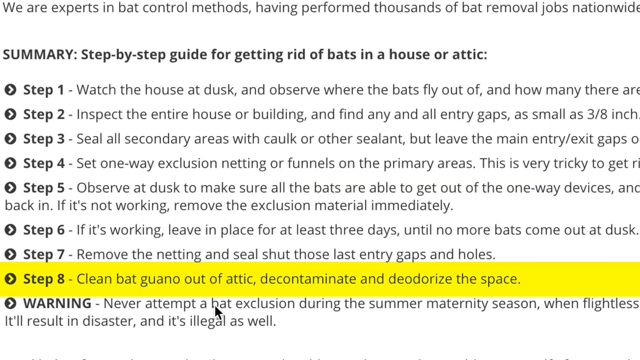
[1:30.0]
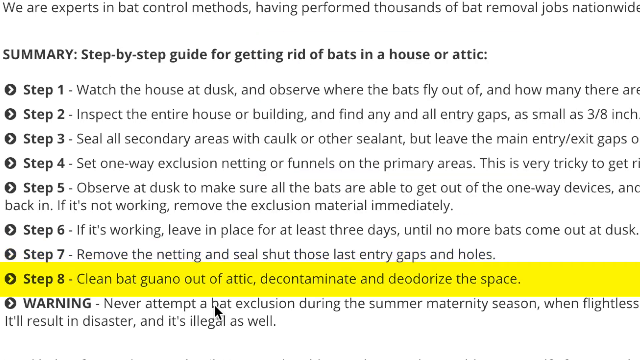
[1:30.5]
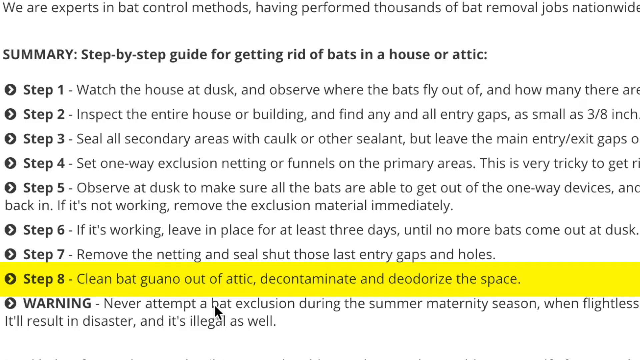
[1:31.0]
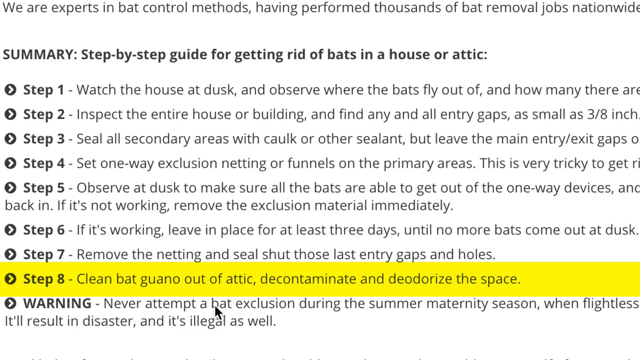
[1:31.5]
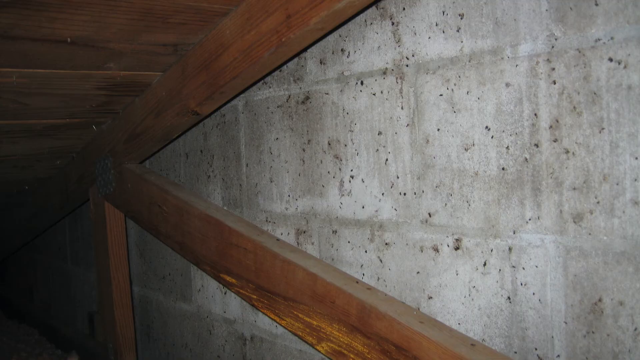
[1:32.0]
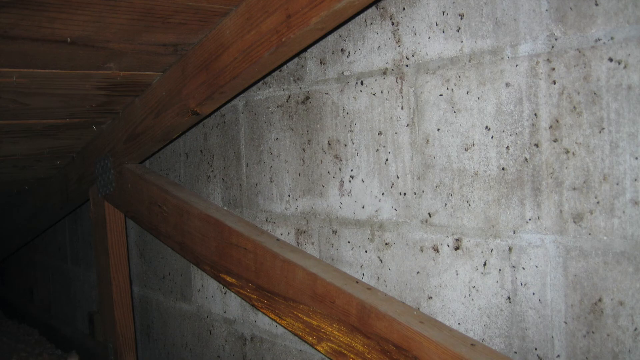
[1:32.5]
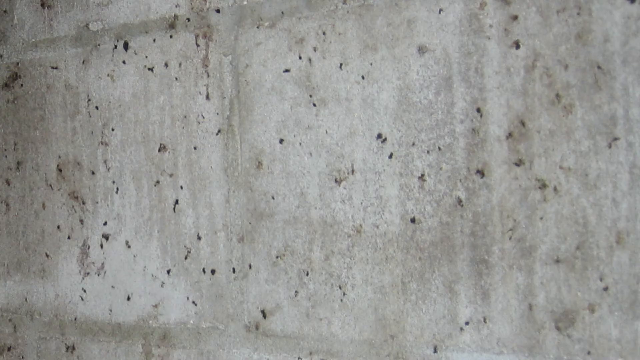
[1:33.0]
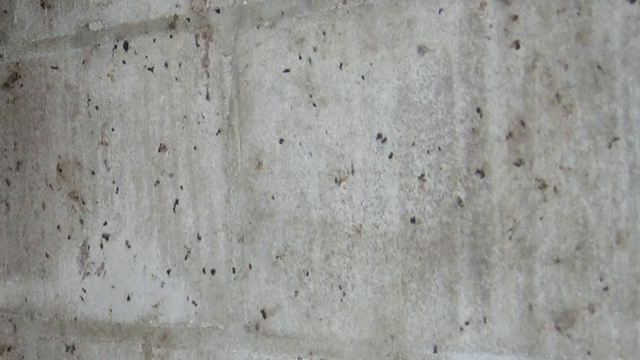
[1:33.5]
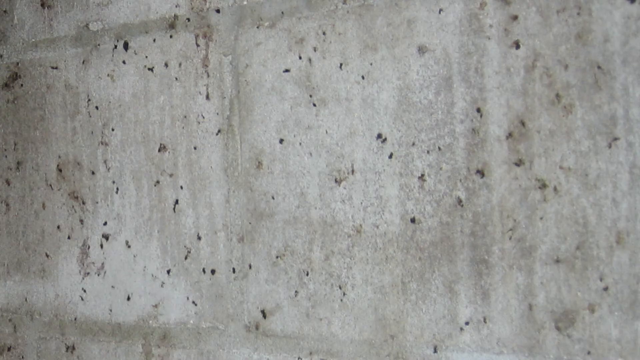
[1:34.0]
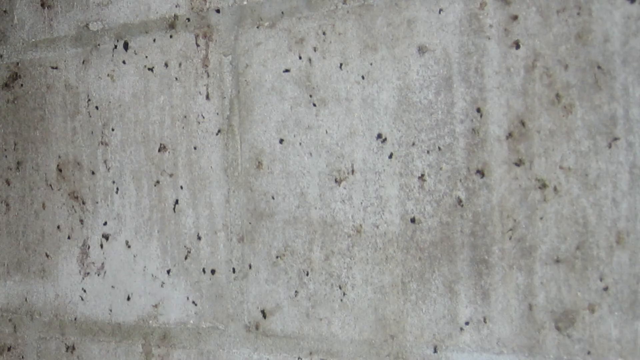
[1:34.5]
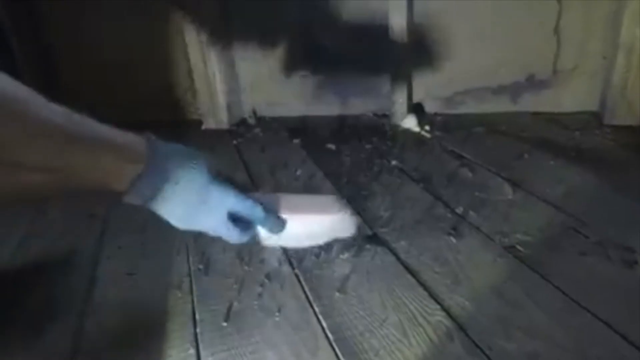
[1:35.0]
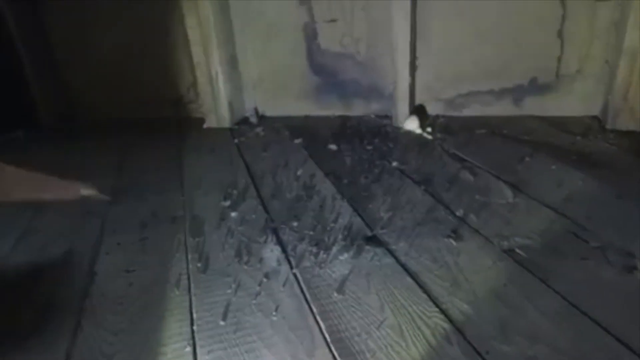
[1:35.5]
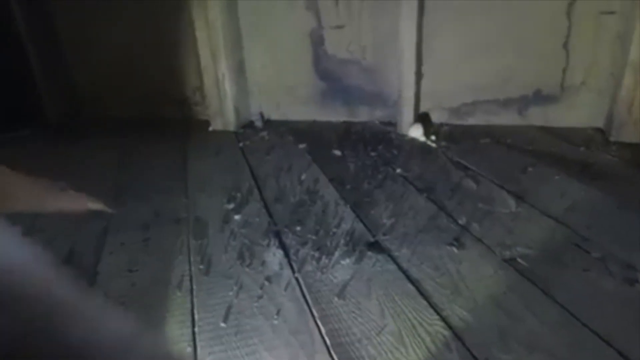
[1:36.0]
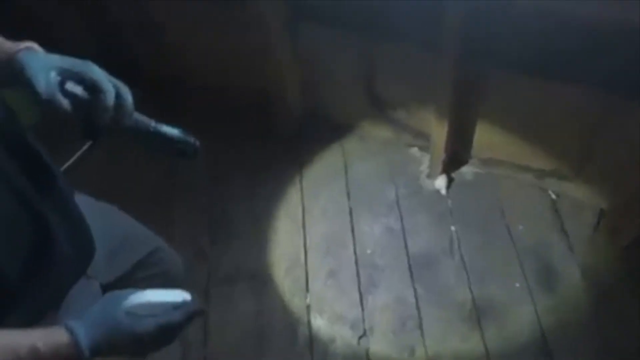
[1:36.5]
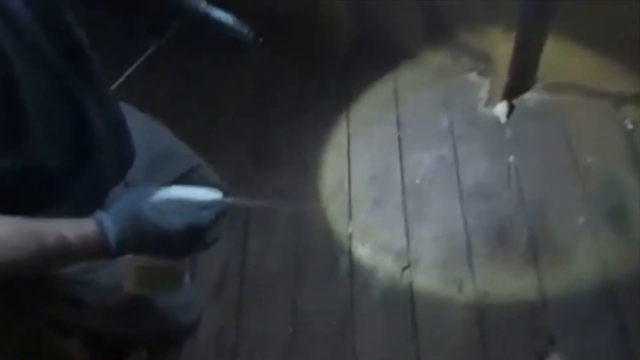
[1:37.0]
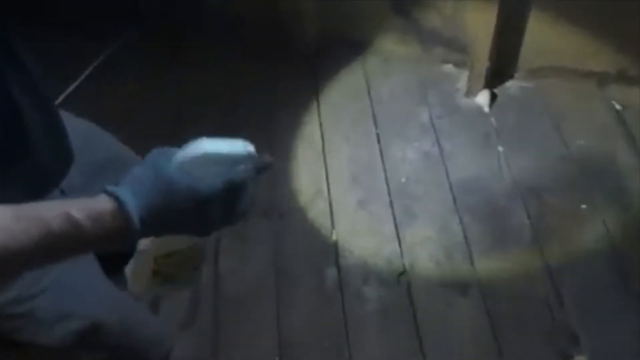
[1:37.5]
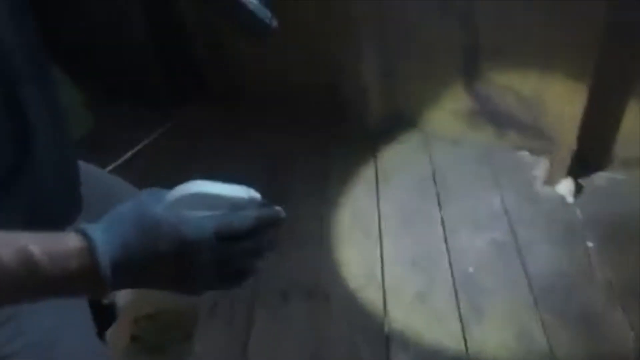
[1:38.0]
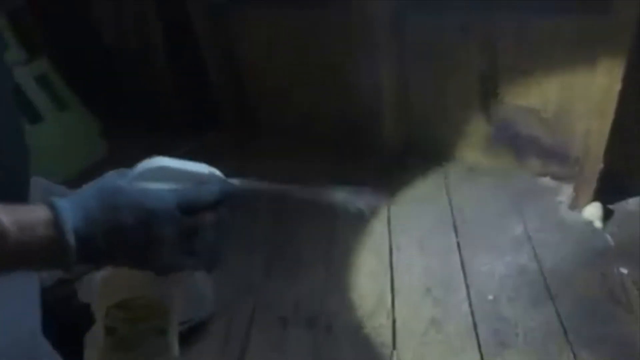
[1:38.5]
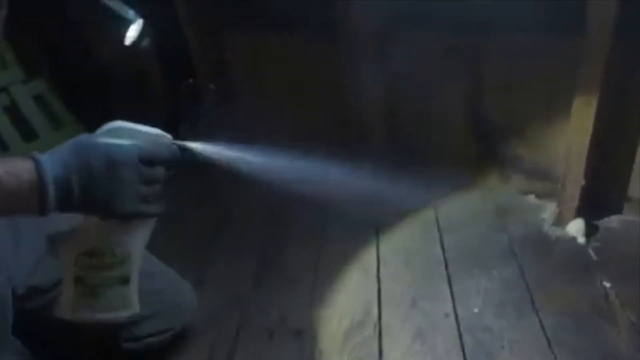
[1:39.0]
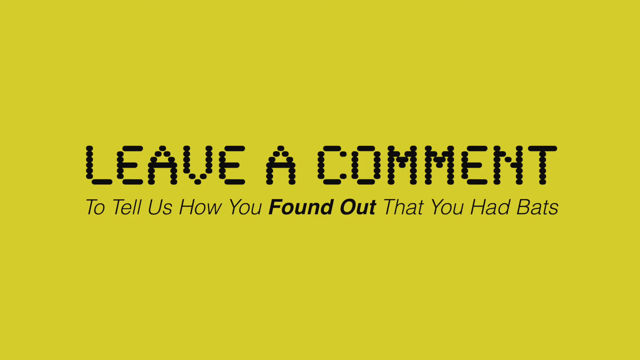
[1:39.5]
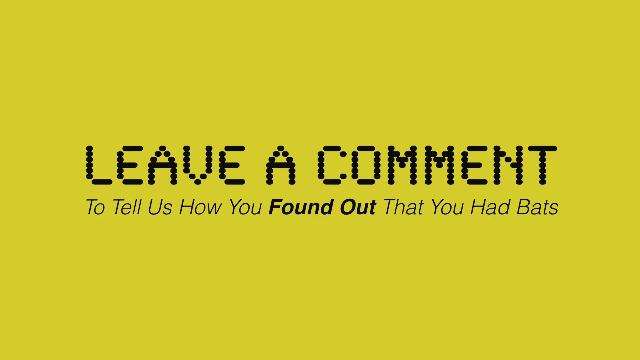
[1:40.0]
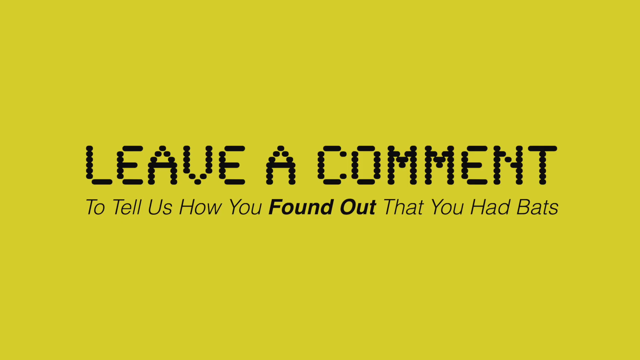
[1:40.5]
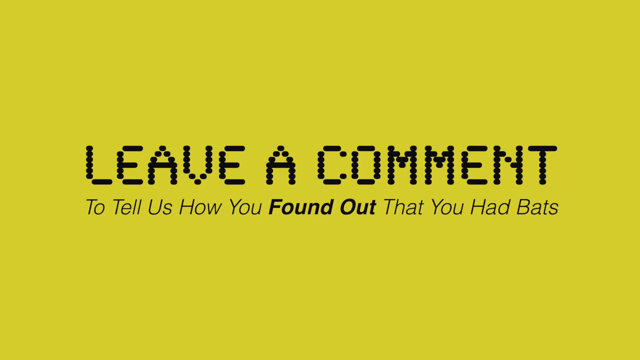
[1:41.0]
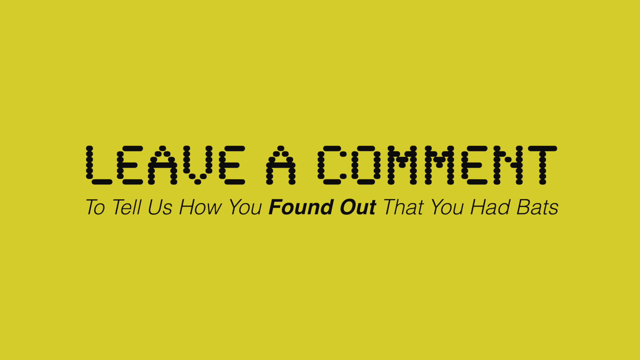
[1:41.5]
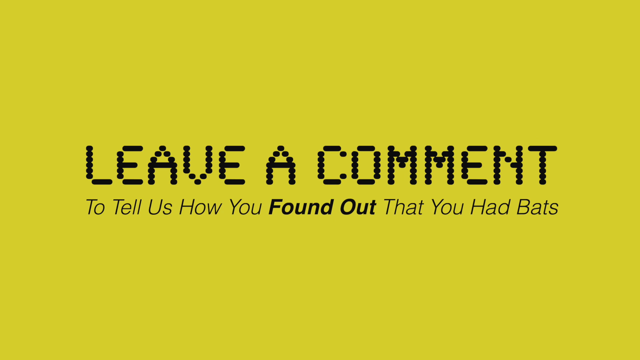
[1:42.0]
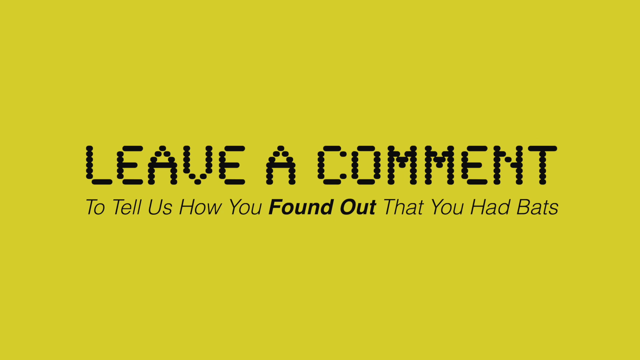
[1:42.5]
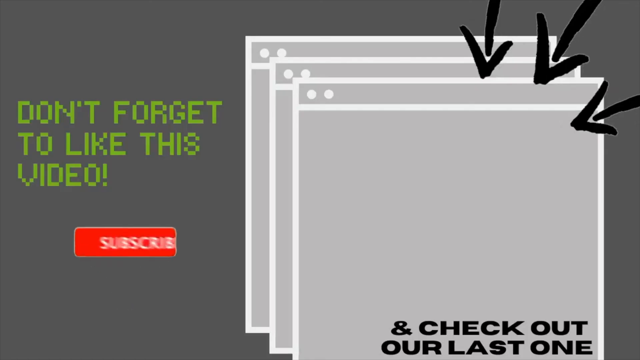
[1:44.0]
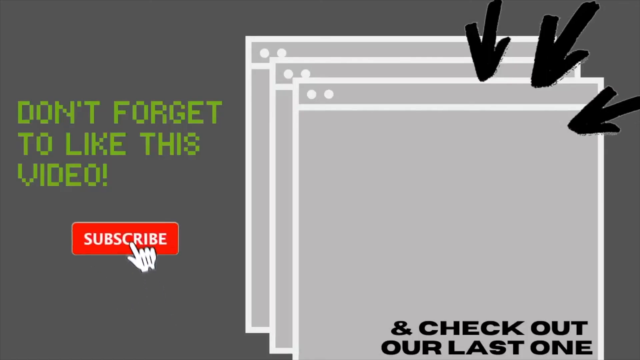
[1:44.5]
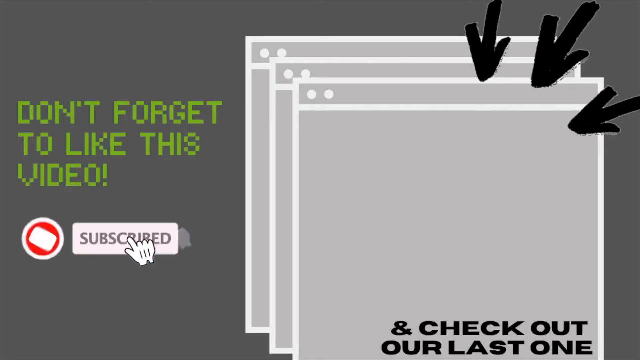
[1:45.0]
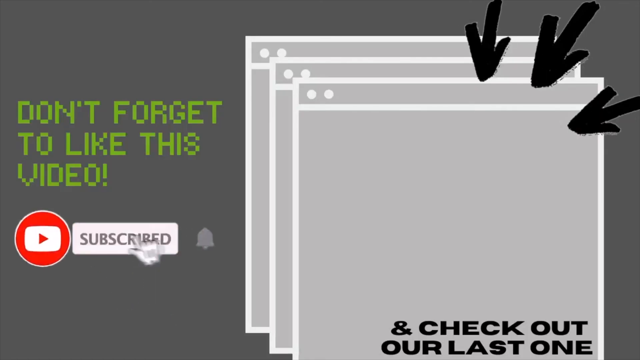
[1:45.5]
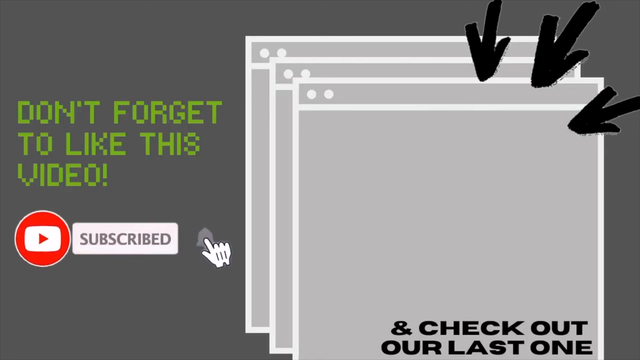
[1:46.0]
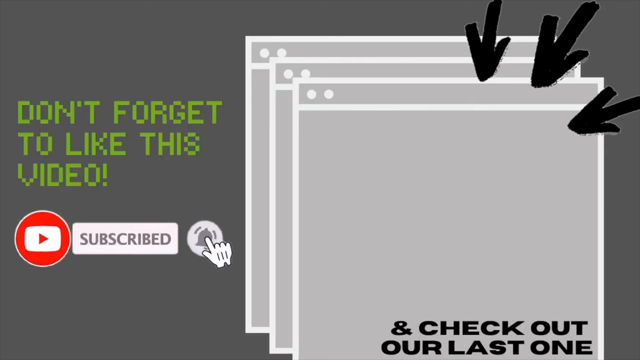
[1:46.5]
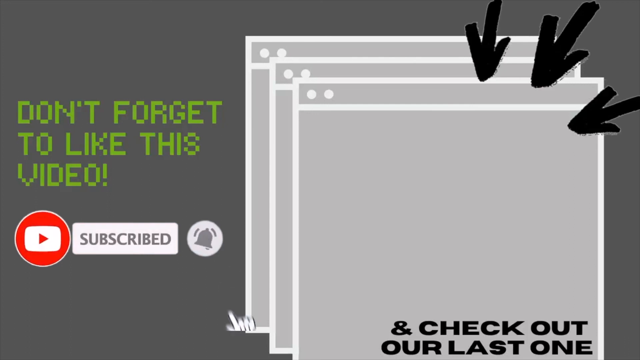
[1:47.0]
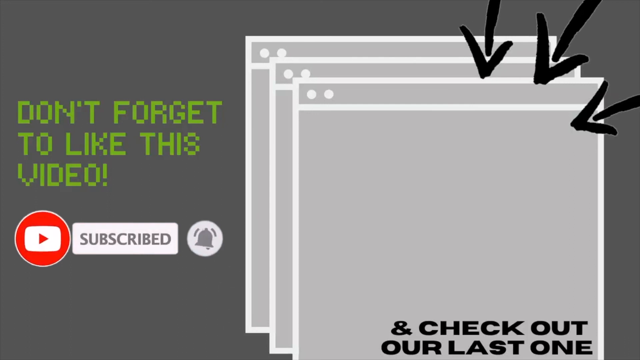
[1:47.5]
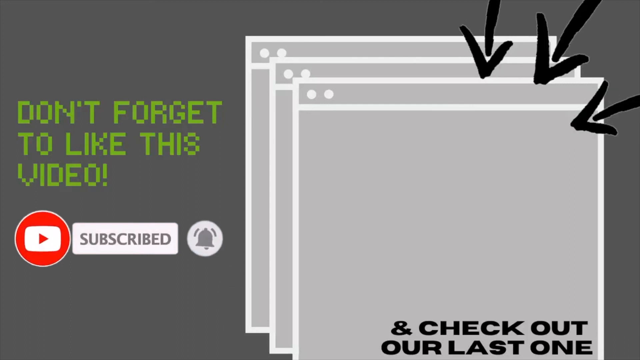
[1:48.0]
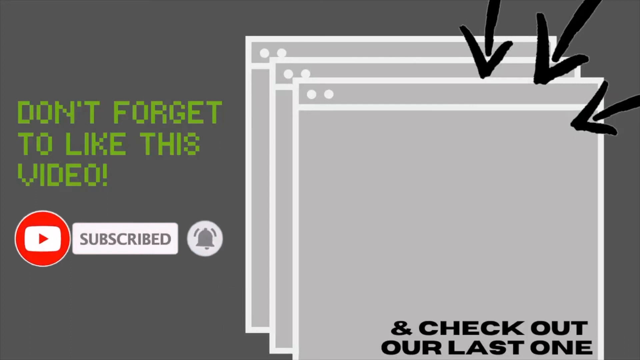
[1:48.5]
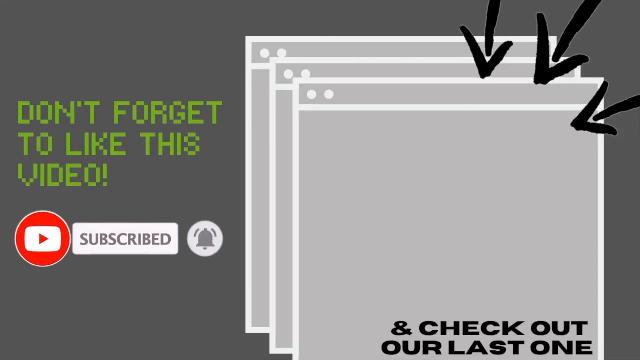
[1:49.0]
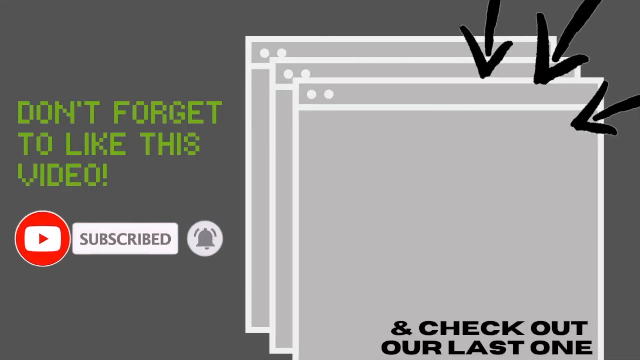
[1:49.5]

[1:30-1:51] Step eight is cleaning out and decontaminating the space where the bats were. Inside, the attic is very messy: the bats have left residue on the wall that looks like it might be feces, with small black areas and other black residue. A man in the attic wearing latex gloves sprays the attic walls and floor, and takes a brush to sweep up the residue and feces the bats left. The video then goes to a solid yellow page that says "leave a comment" in black letters formed by little black circles, with occasional spaces, such as where the horizontal part of the L meets the vertical part. Underneath it says "tell us how you found out that you had bats" and "don't forget to like this video." There is a red subscribe button with a white circle next to it on the left side, and three pages stacked one on top of the other with black arrows pointing to them. A white hand appears, hits subscribe first, and then pushes a little bell. The black arrows in the upper right corner begin to flash.